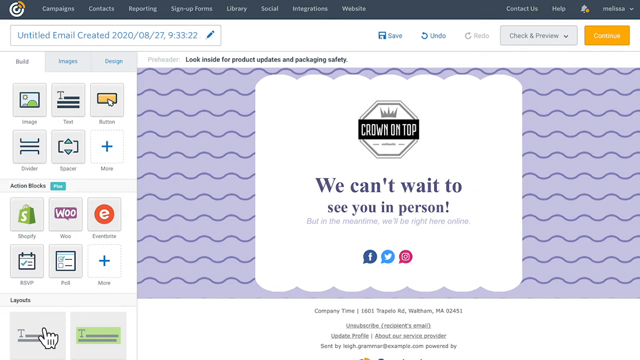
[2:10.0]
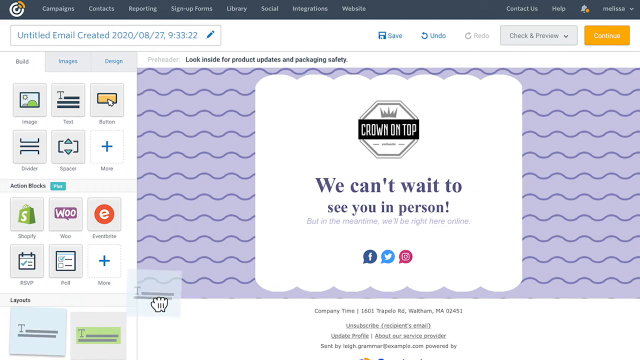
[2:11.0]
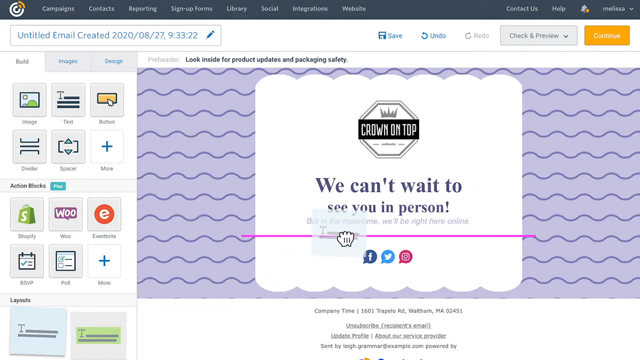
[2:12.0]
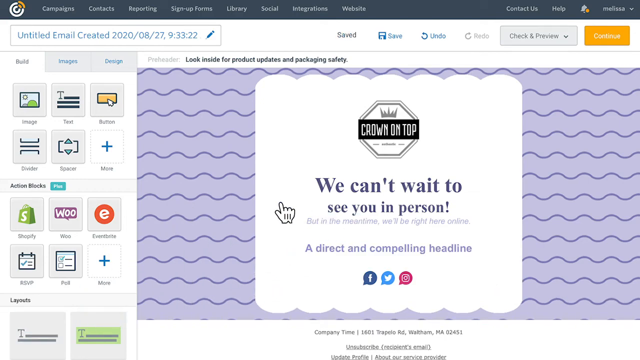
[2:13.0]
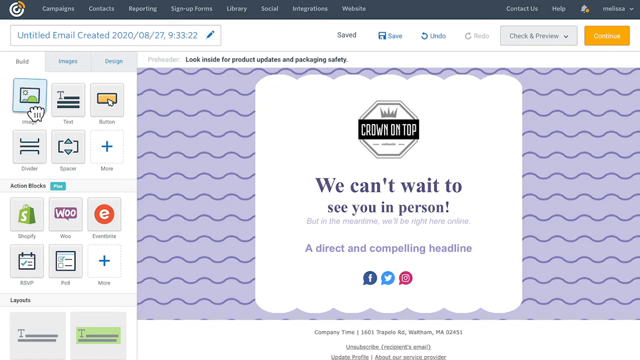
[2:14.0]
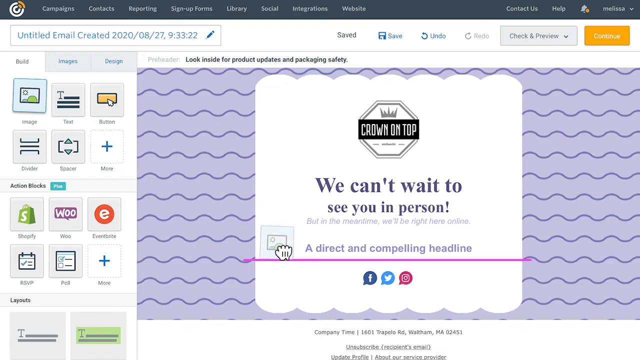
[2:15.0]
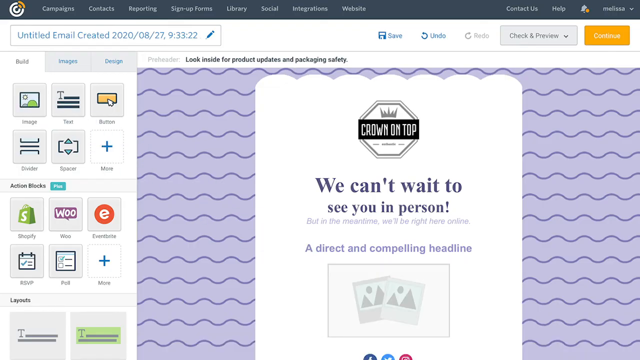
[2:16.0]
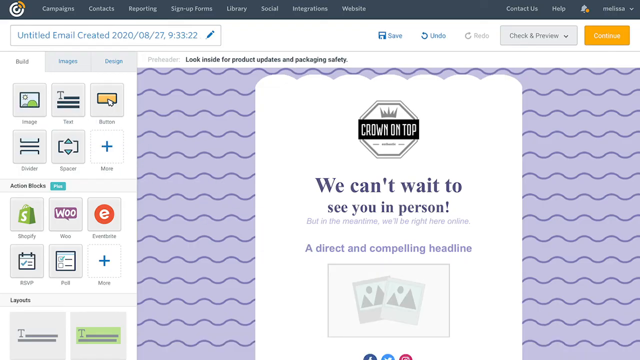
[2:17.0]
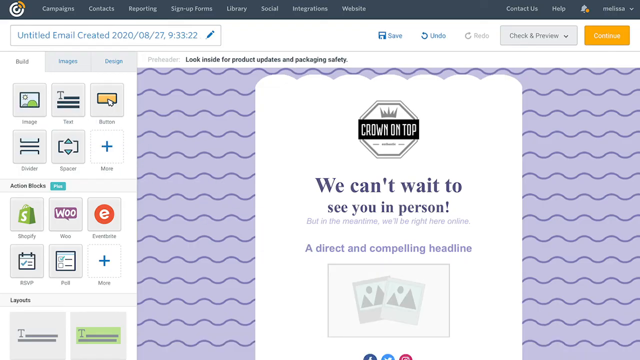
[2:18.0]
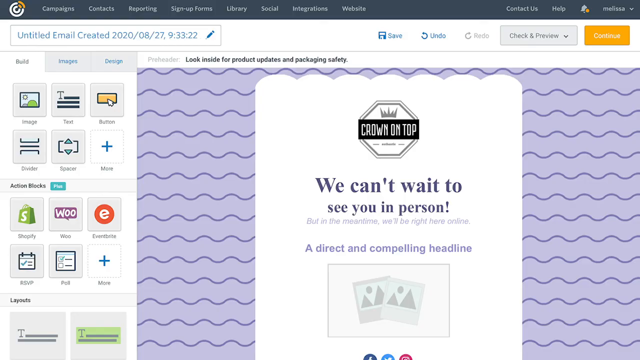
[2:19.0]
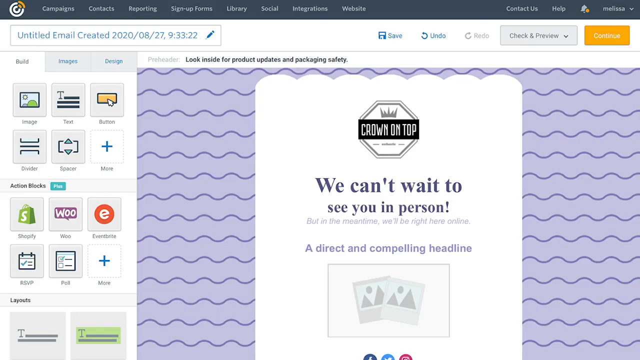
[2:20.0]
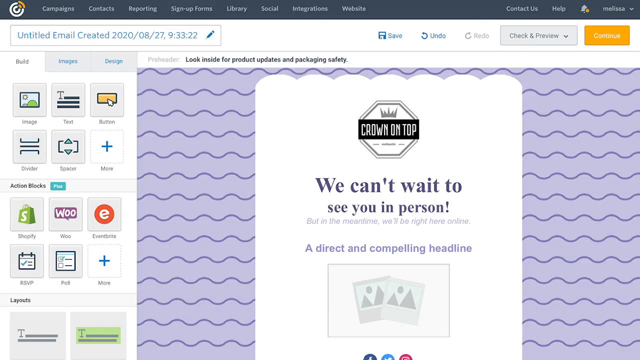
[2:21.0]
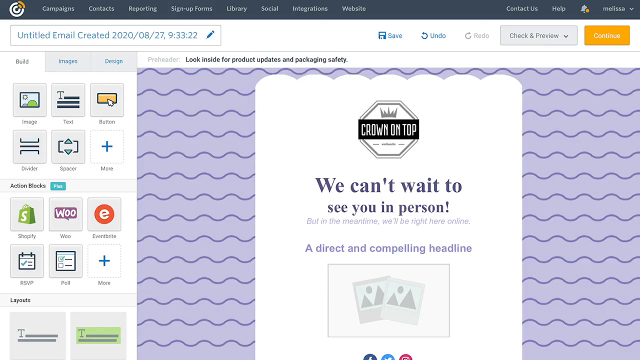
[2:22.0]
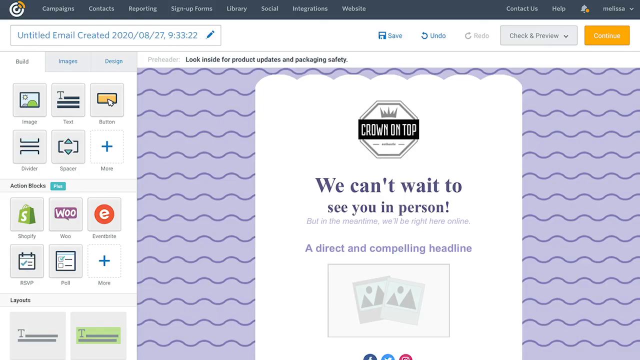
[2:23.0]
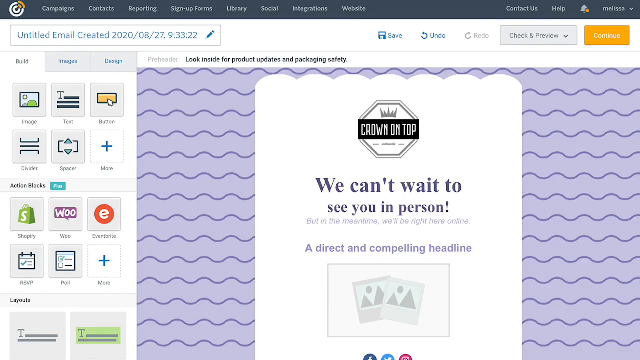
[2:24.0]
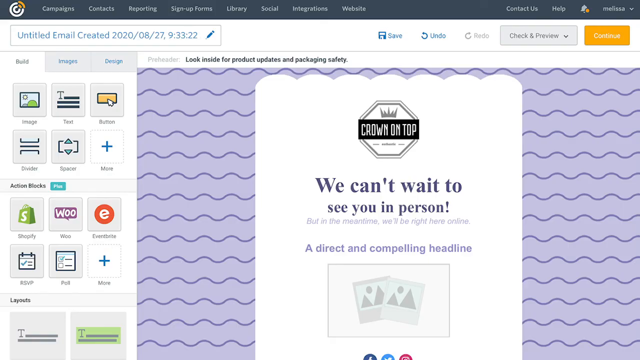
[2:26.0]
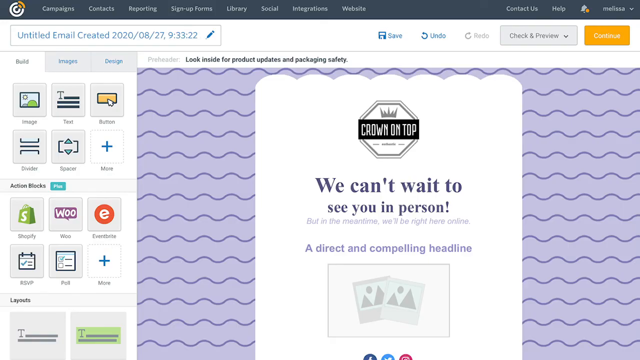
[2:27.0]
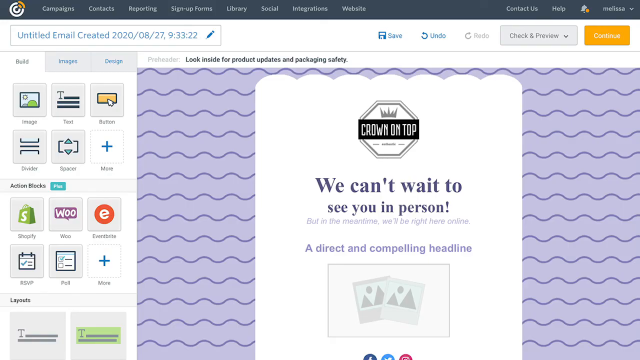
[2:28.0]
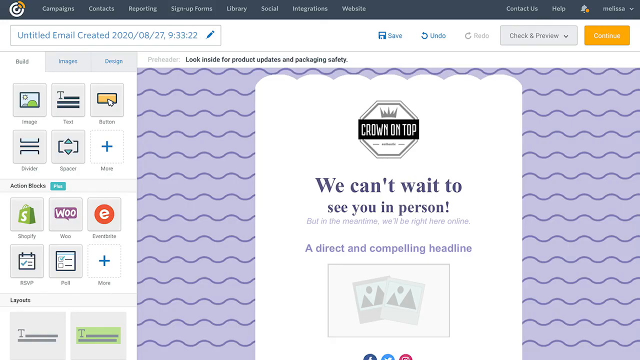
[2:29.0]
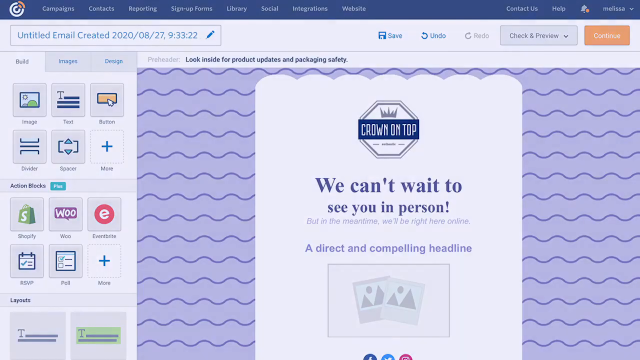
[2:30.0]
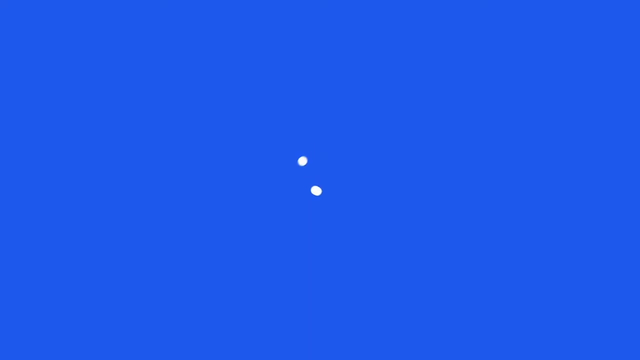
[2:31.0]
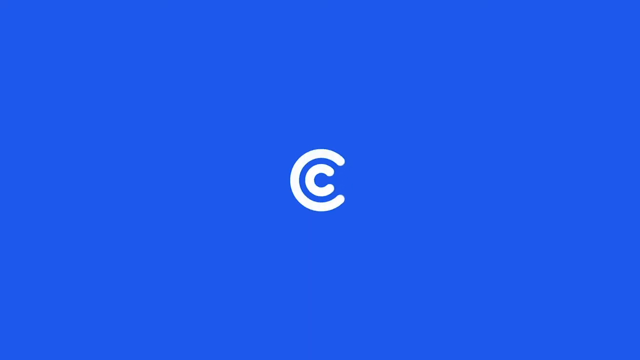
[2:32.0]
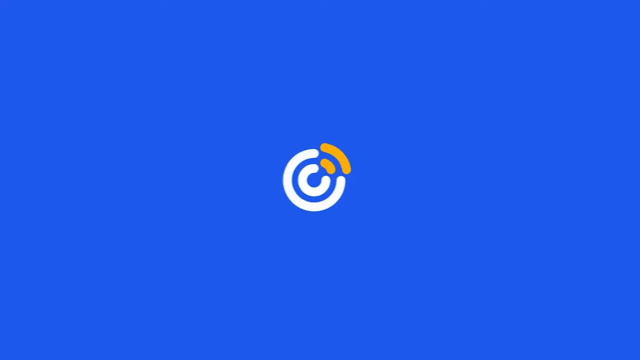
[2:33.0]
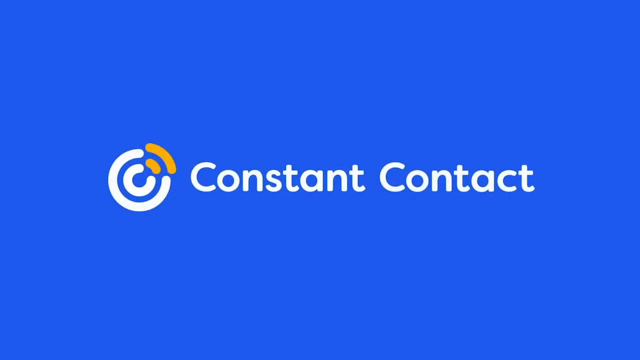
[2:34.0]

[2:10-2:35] A very stripped-down version of the email appears with no text copy, just the "crown on top" logo and "We can't wait to see you in person." Below that, in a lighter blue, smaller italicized font, it reads "but in the meantime we'll be right here online." Right below are buttons linking out to Facebook, Twitter and Instagram, and at the very bottom it reads "company time" with an address in Waltham, Massachusetts, along with unsubscribe, update profile and similar links. More items are then dragged in: another header reading "a direct and compelling headline" and another placeholder image. This appears to be the end of the tutorial, which seems to be from Constant Contact, as the logo in the upper left-hand corner matches the logo shown at the very end.